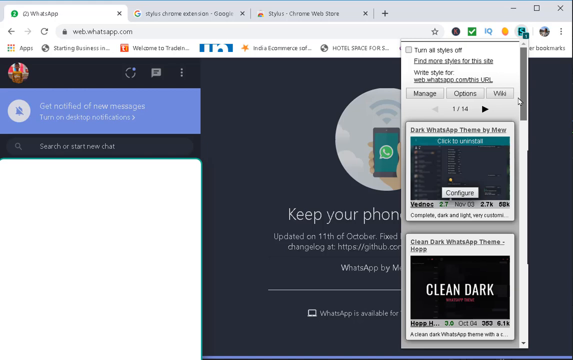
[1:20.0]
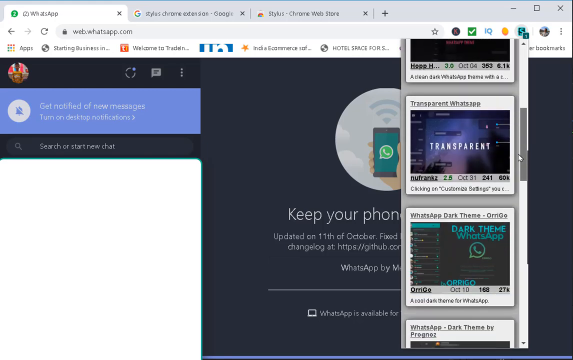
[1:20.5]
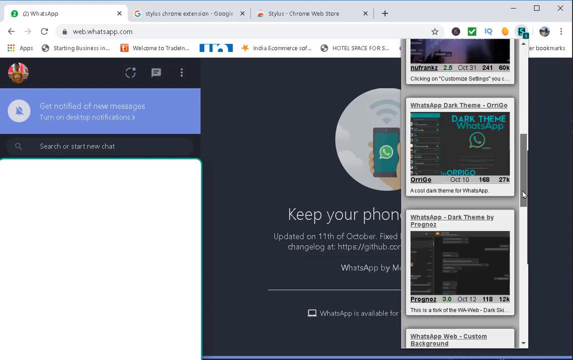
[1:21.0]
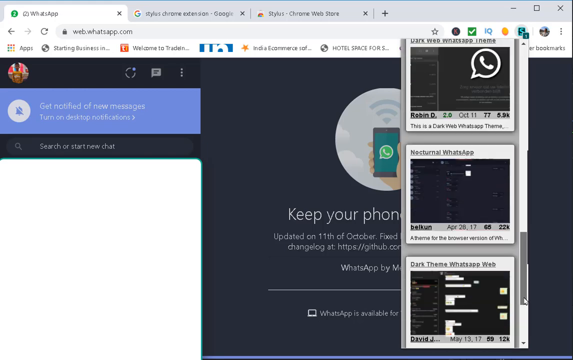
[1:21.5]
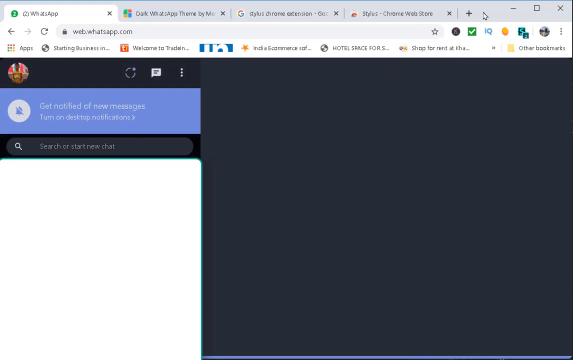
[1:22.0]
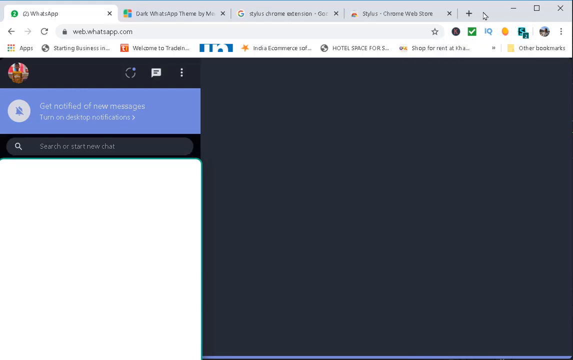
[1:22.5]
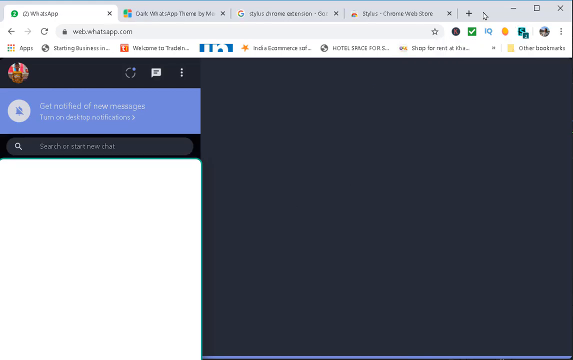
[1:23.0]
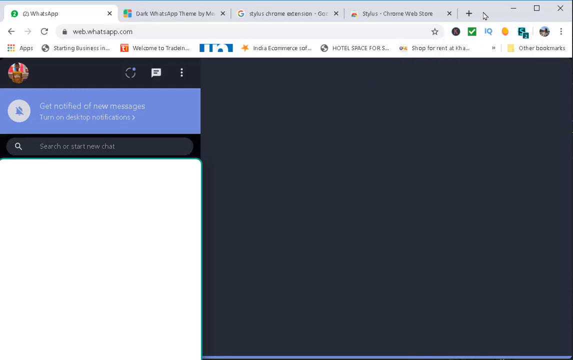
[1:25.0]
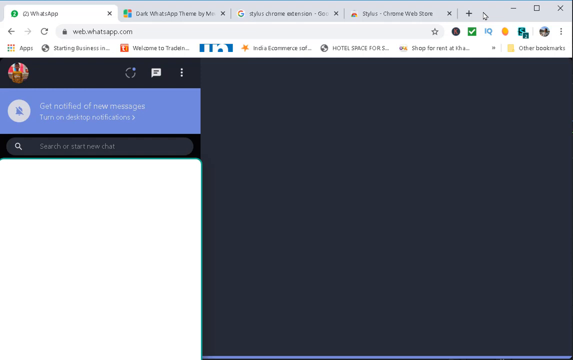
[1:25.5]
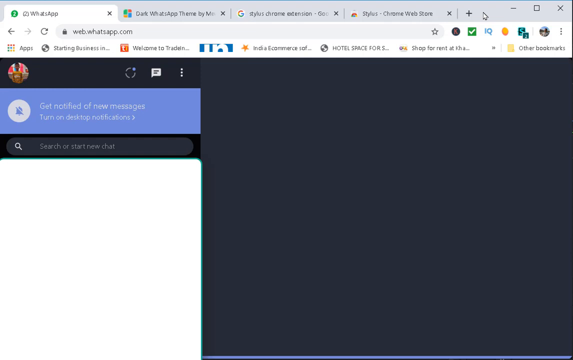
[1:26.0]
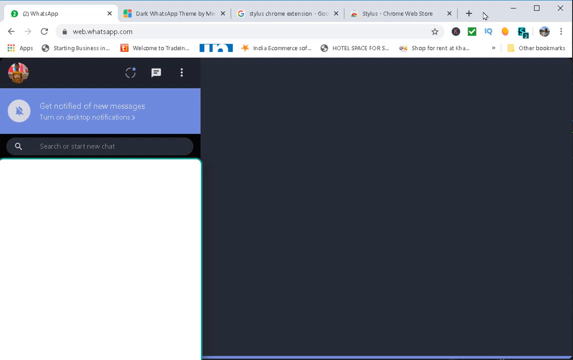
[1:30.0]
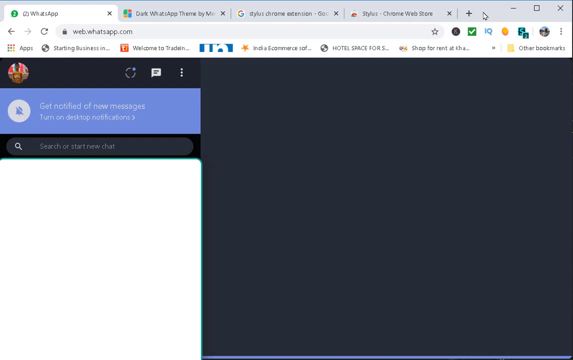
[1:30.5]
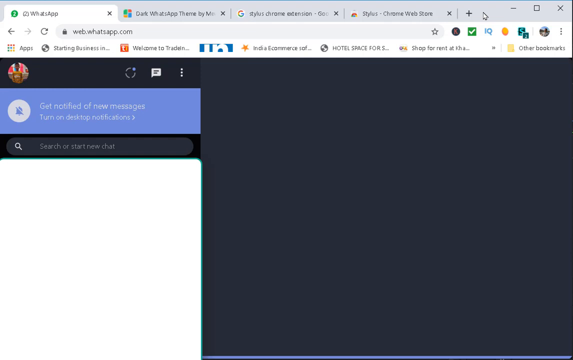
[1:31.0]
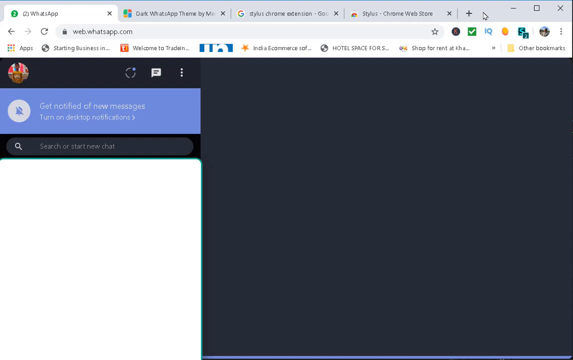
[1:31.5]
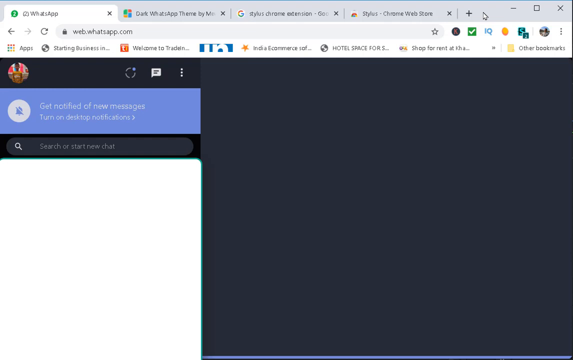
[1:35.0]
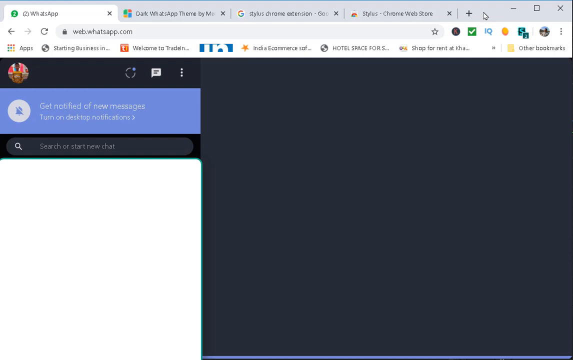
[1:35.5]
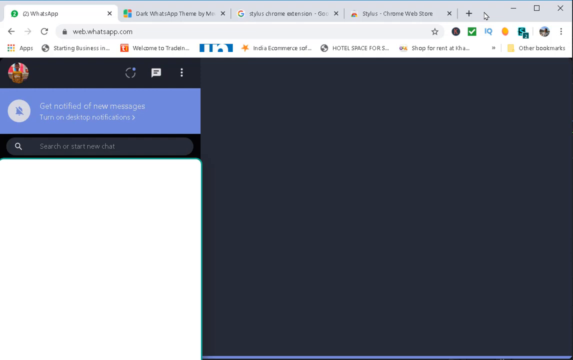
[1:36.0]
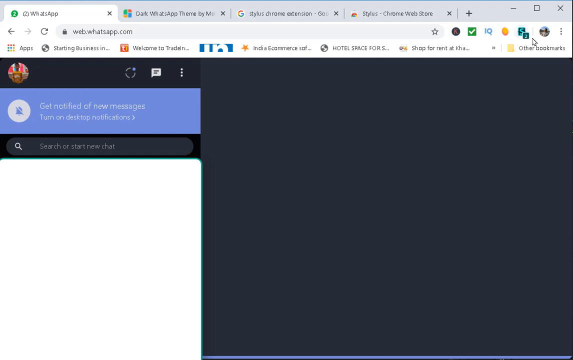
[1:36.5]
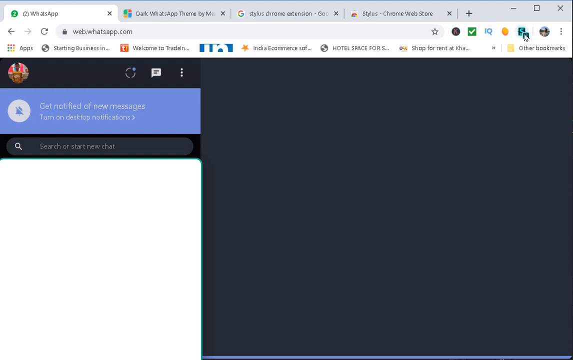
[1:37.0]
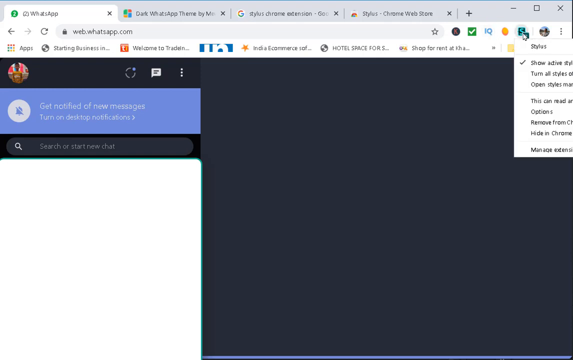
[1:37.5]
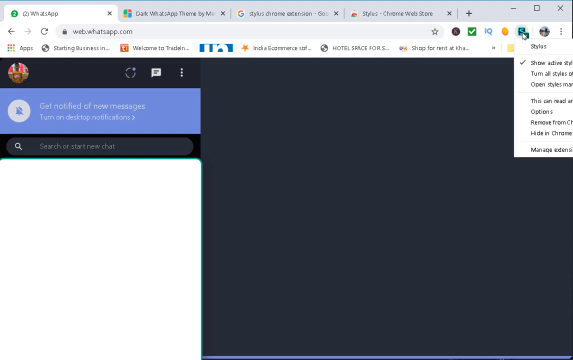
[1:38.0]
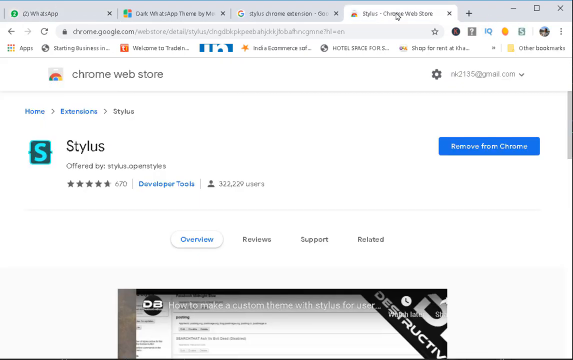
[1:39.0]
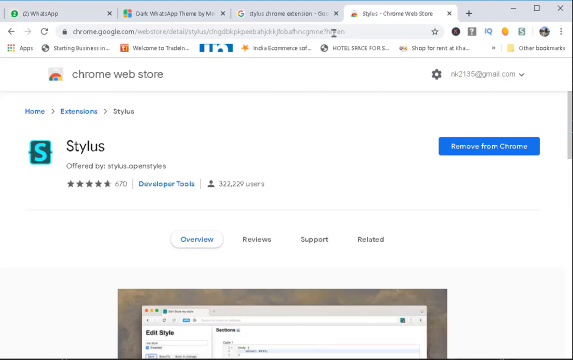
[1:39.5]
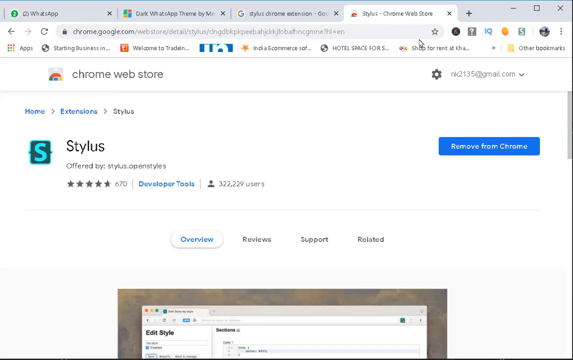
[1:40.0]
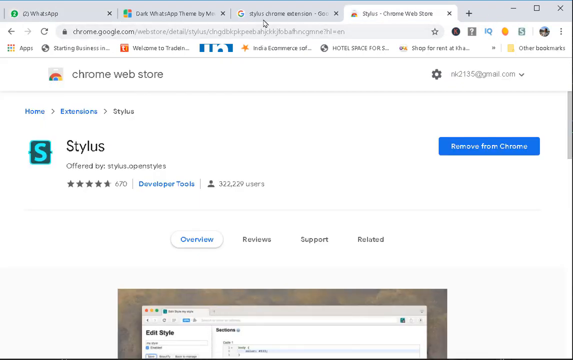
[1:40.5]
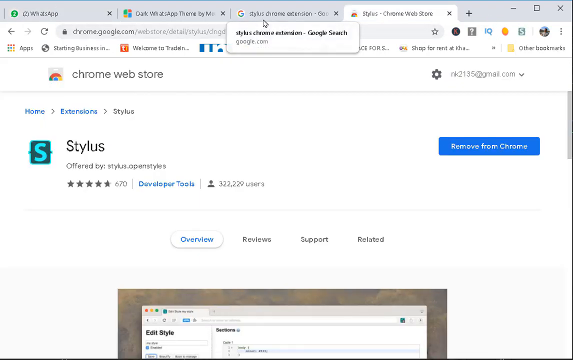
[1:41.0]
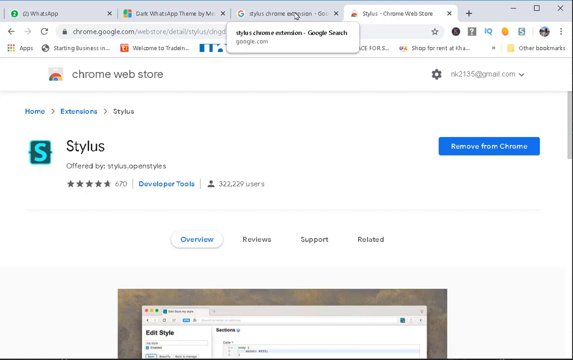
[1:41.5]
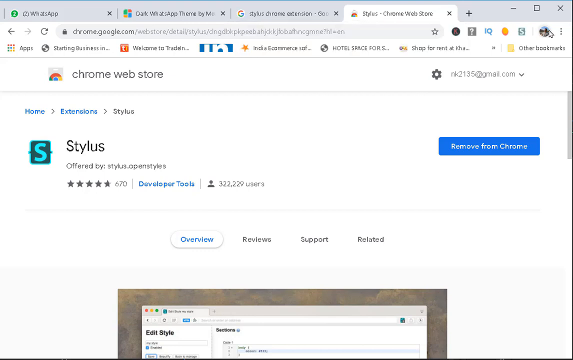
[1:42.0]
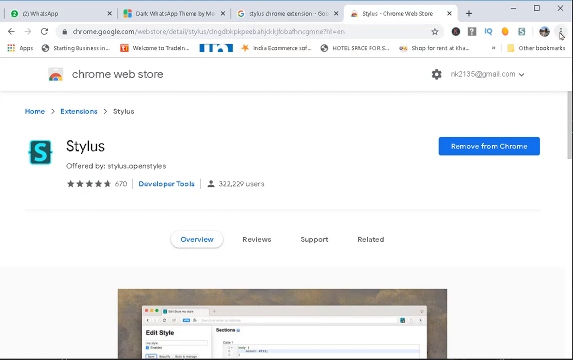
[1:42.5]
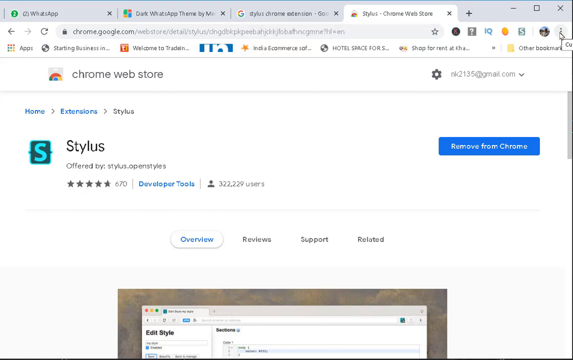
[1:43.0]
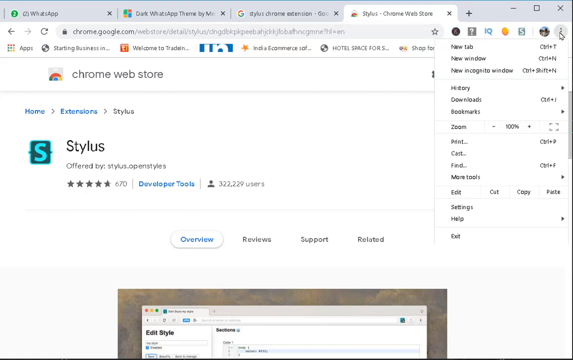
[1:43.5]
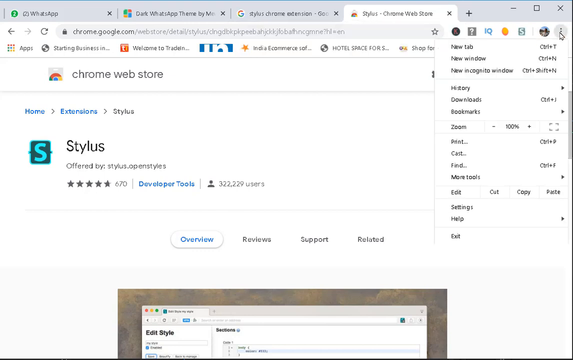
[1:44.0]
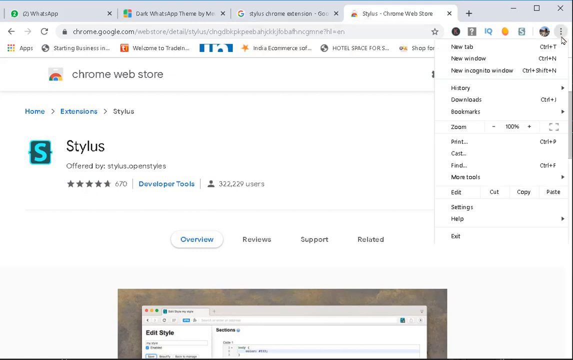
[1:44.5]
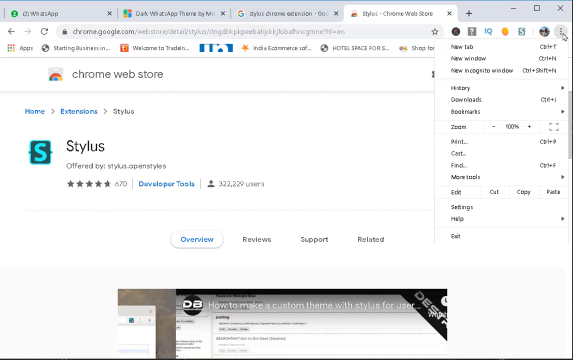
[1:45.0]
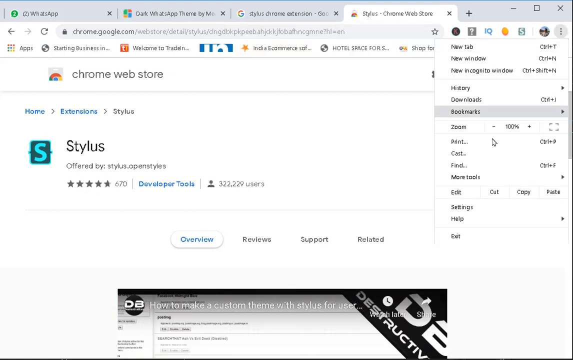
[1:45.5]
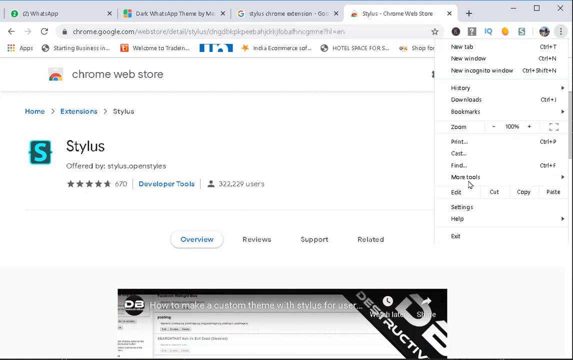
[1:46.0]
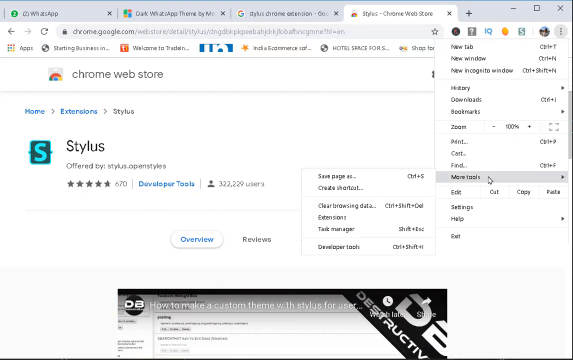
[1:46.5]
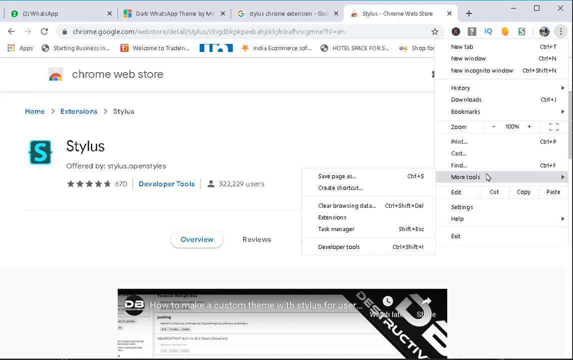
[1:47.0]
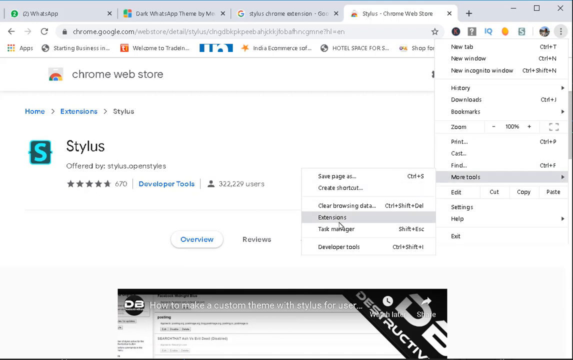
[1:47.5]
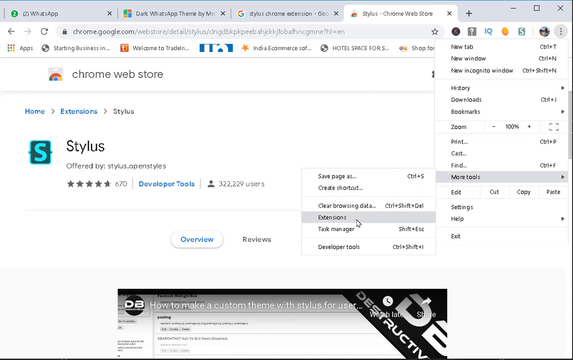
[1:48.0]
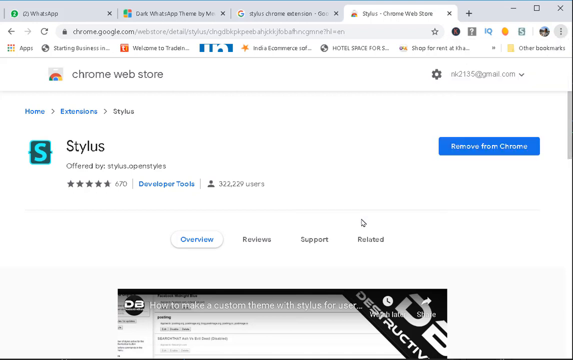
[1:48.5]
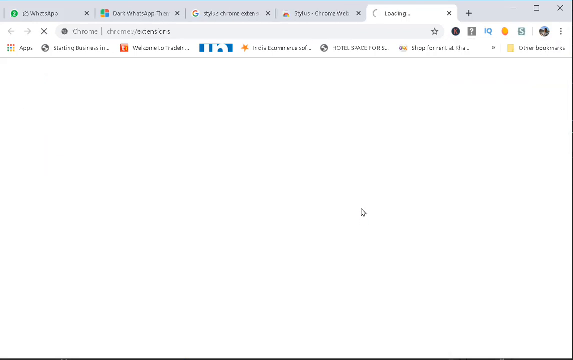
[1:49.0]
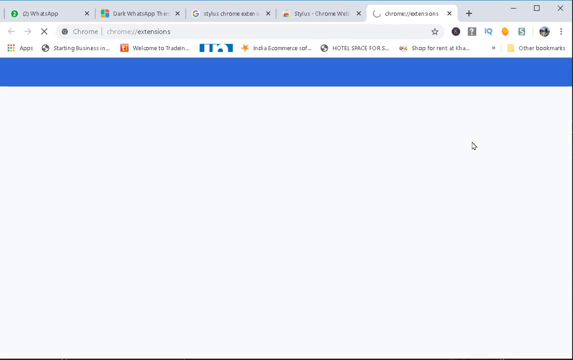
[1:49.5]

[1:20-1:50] Another style is chosen. The browser's options are opened and the extensions section is reached, then the Stylus extension, where another theme can be applied in place of the current one. The applied theme looks darker and shows that it was updated on the 11th of October. The Stylus extension icon stays next to the account's profile picture.